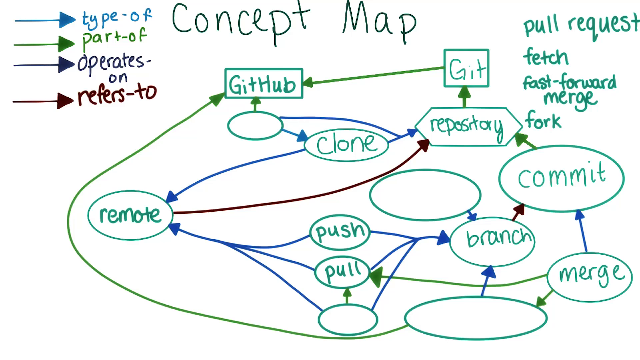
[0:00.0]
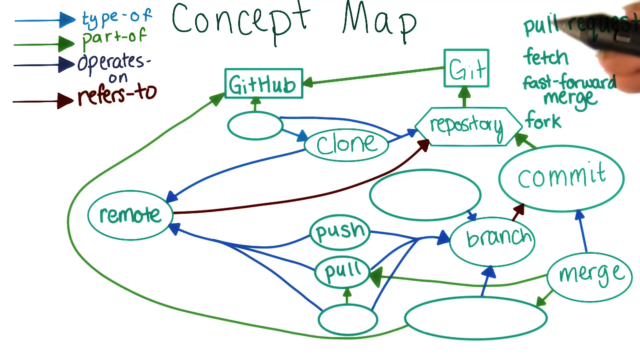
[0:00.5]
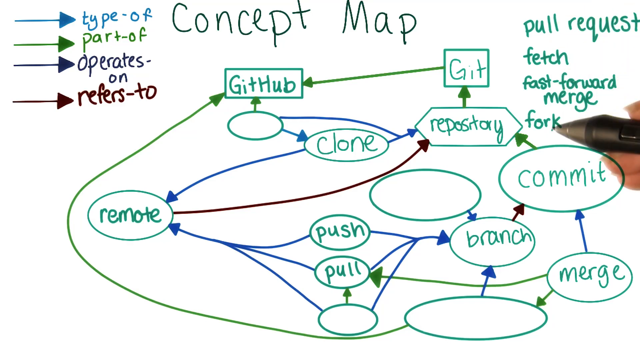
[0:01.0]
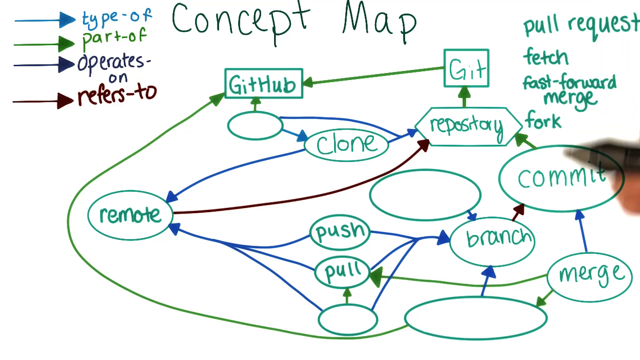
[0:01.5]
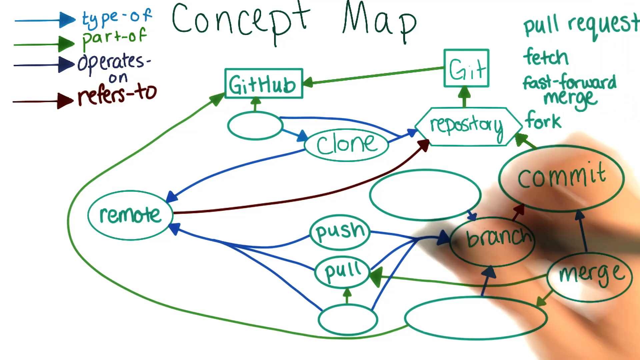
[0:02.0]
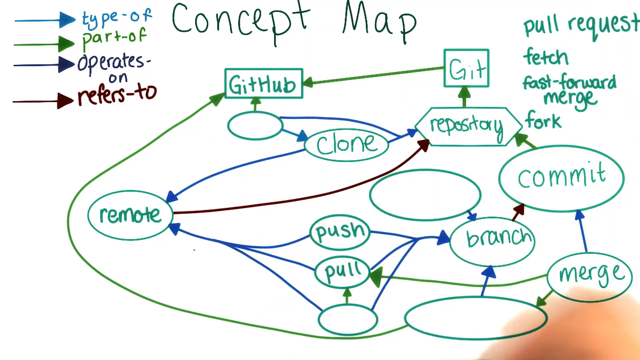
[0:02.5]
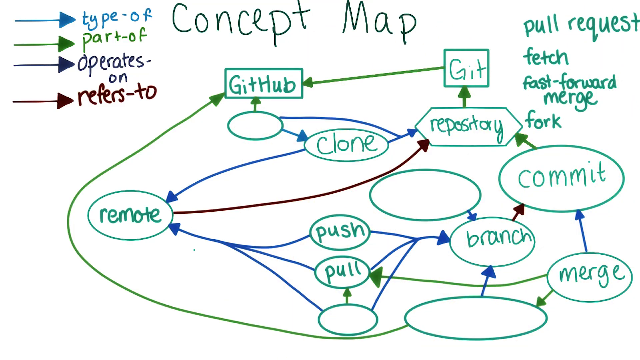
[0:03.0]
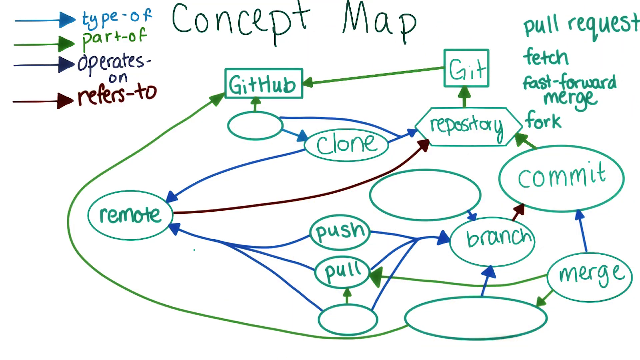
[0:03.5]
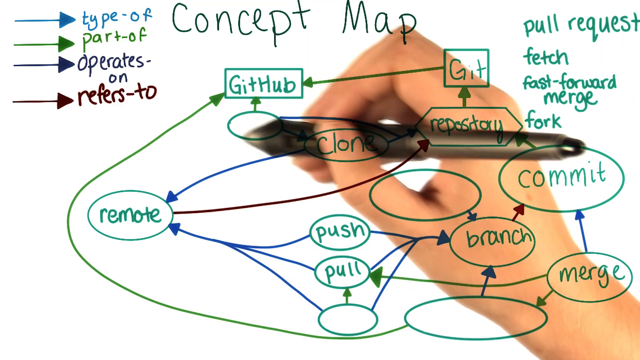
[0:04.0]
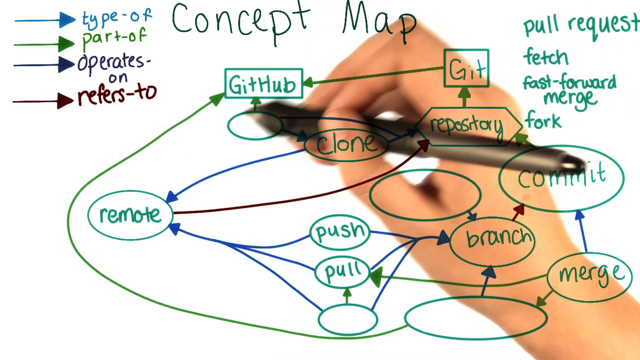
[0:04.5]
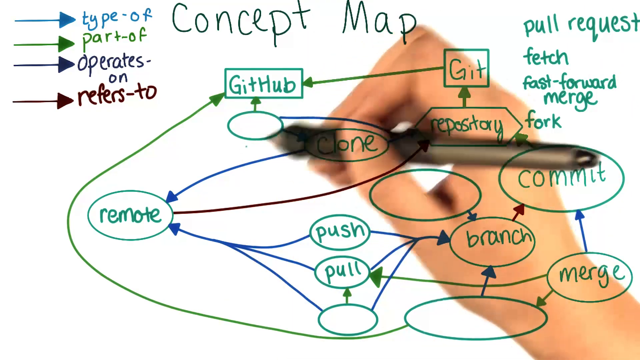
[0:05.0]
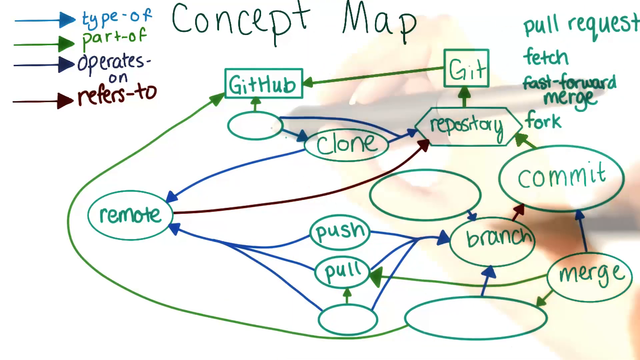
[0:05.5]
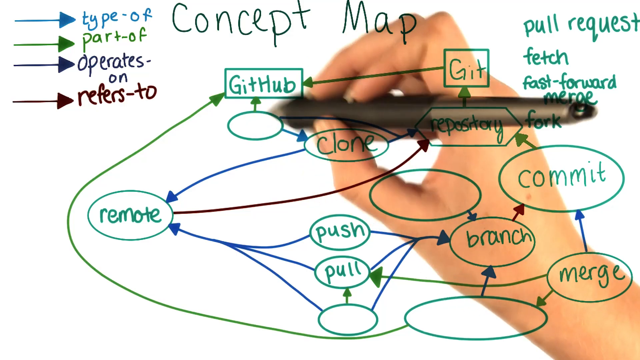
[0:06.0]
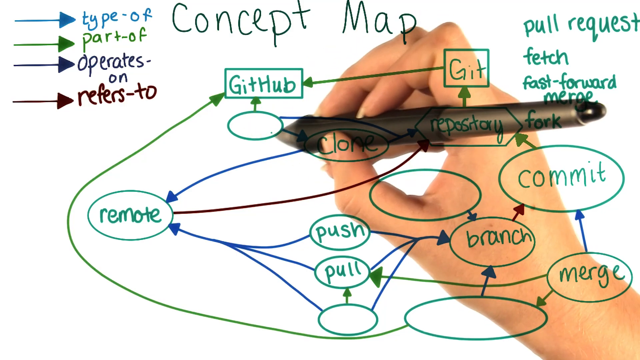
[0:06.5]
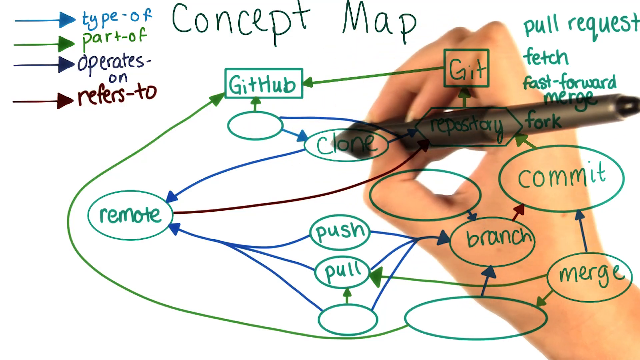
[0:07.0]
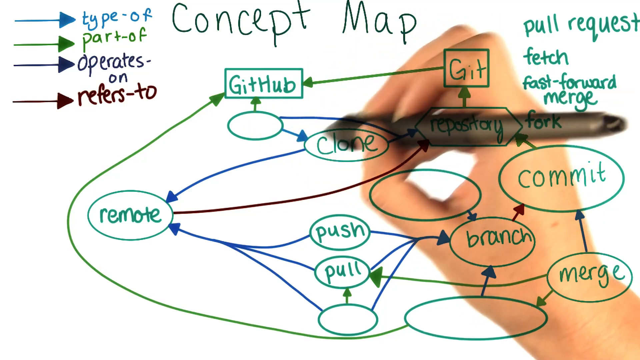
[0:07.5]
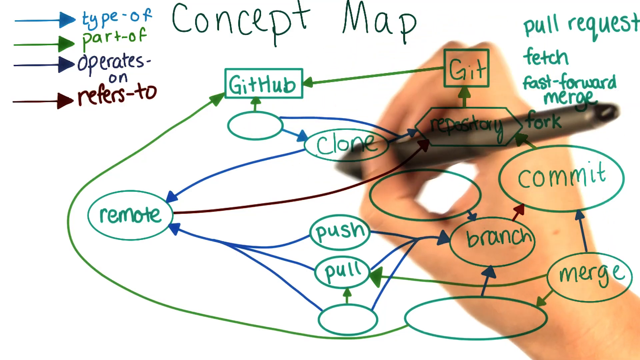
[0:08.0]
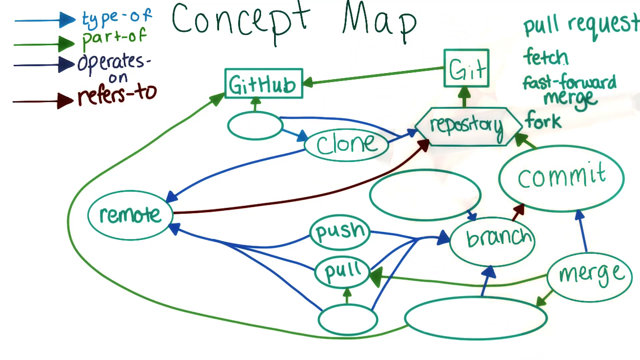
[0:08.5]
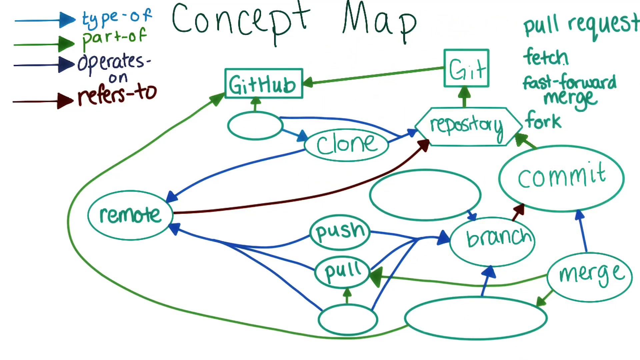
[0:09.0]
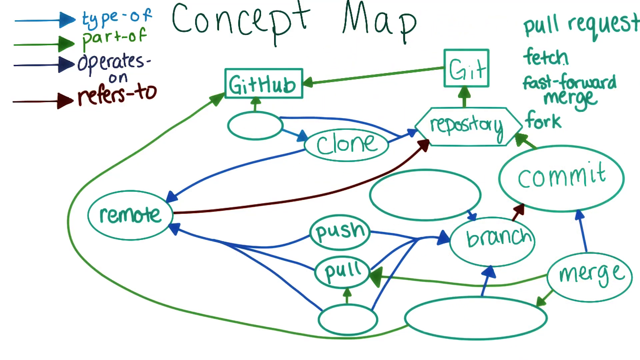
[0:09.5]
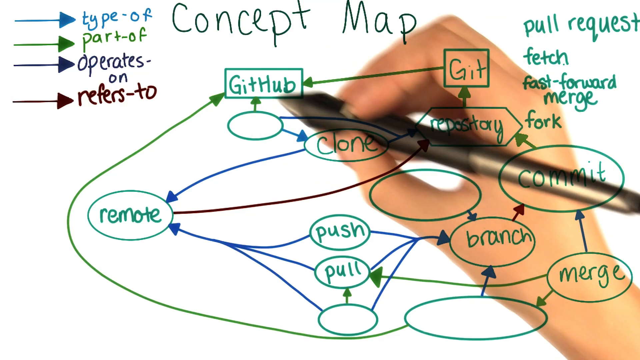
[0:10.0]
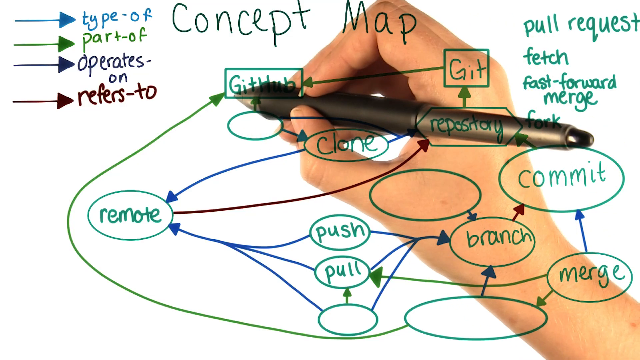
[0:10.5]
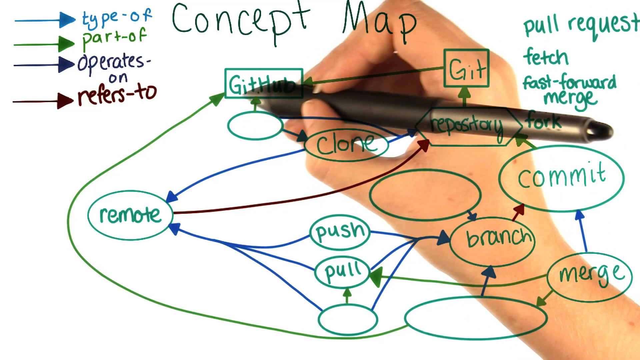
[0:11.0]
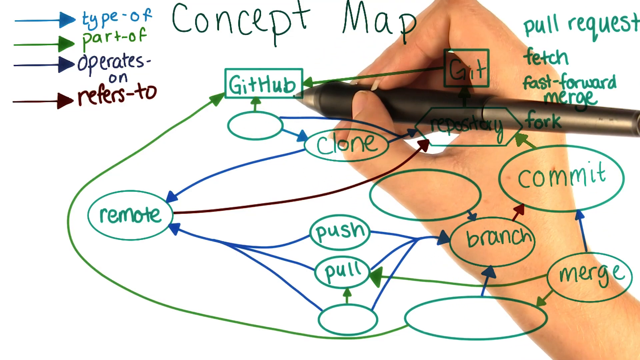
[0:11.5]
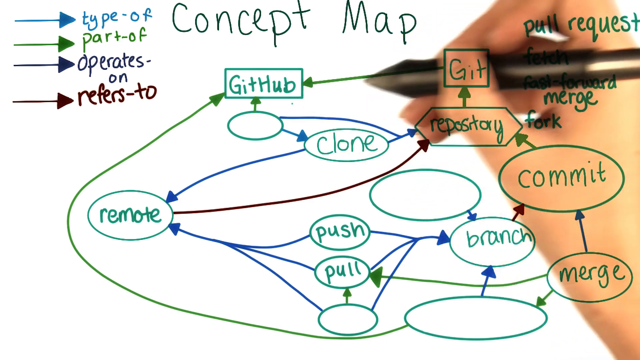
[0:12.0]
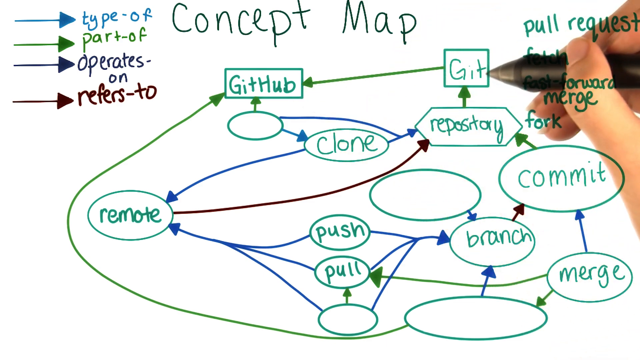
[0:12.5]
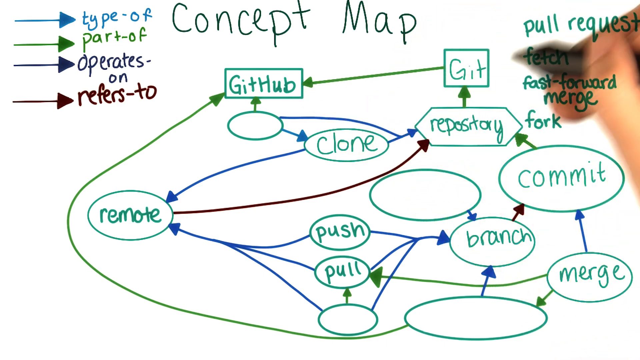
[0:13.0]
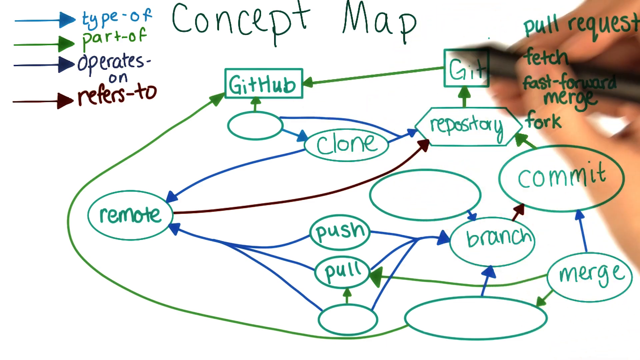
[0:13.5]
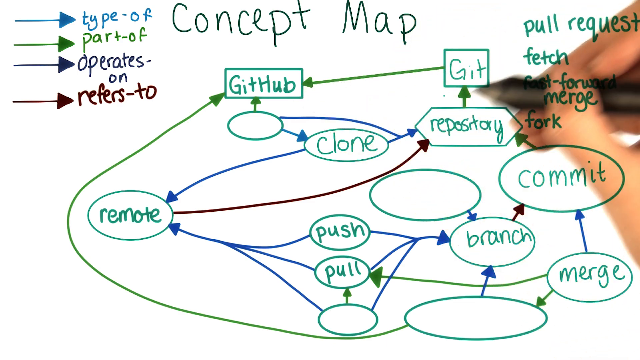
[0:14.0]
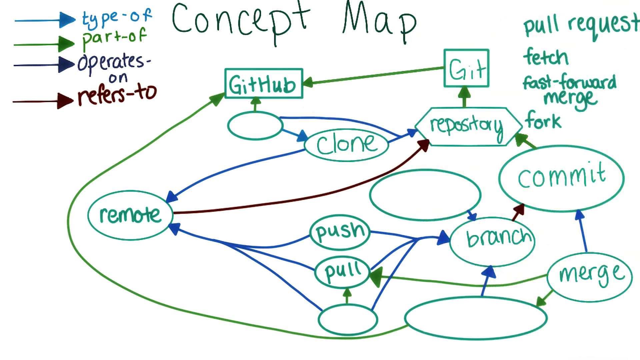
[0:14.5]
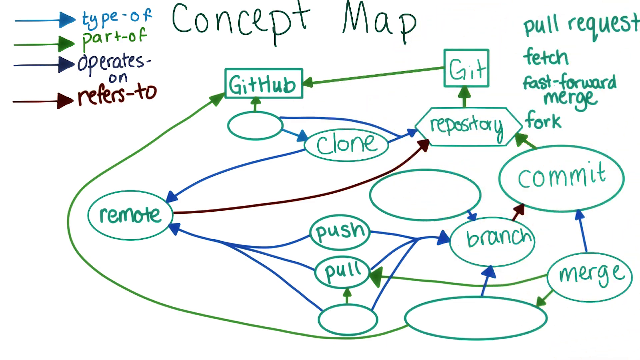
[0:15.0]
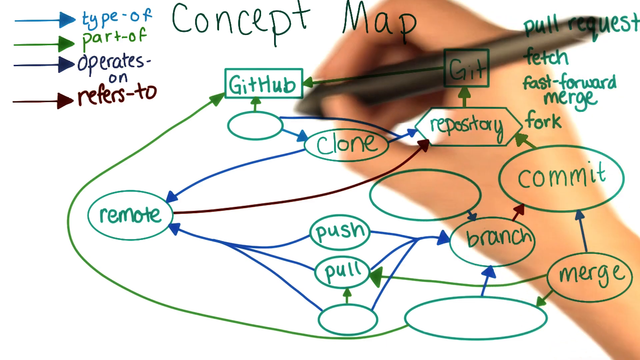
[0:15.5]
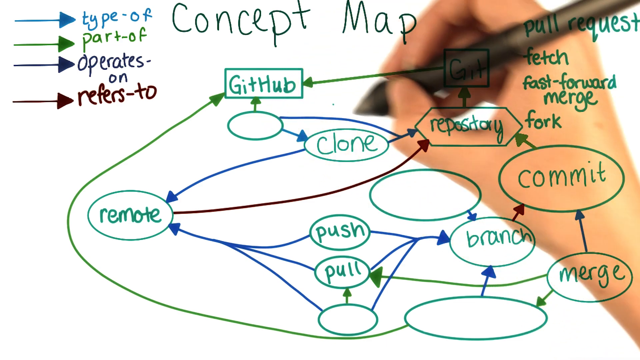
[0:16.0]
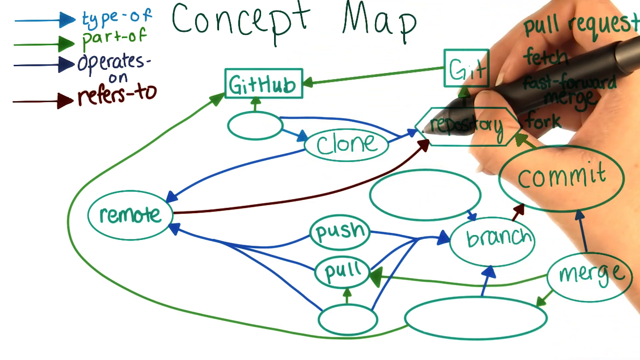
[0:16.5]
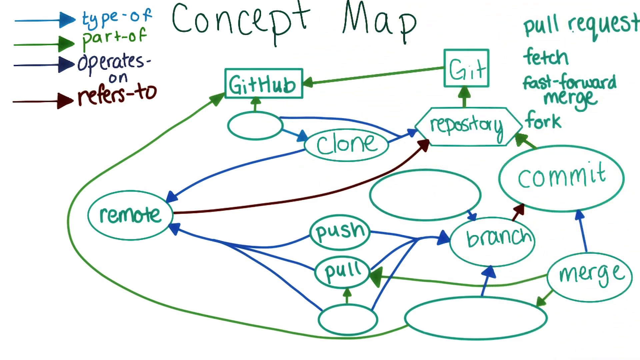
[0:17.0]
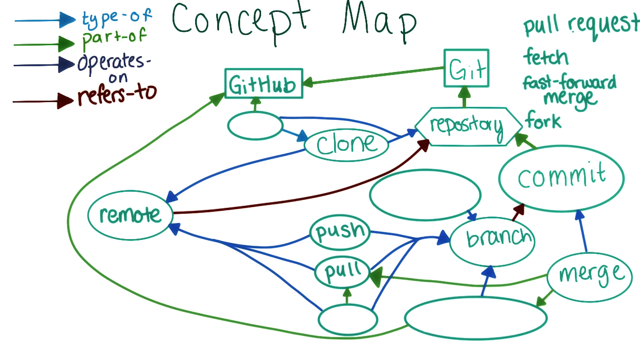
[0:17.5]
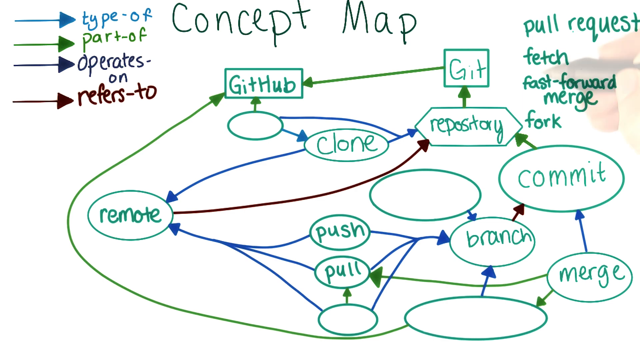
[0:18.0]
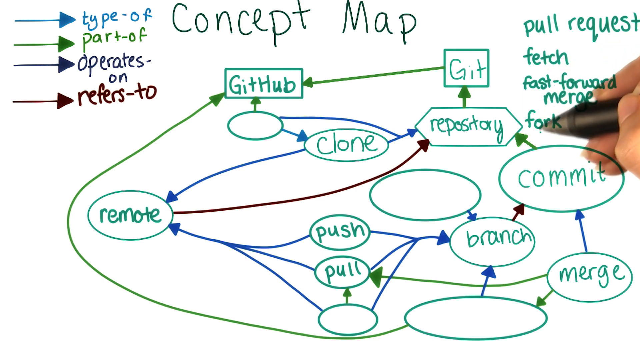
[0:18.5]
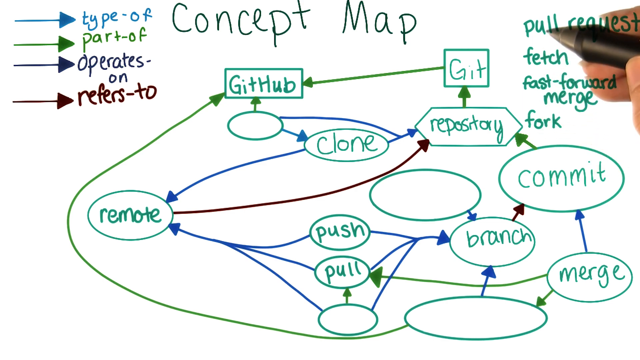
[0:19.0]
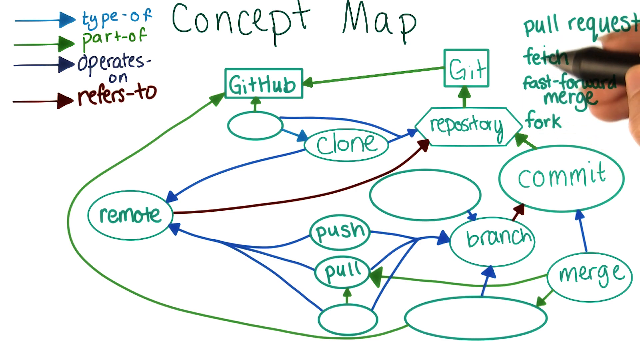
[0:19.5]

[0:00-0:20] The words "concept map" appear at the top. A legend shows a blue arrow labeled "type of," a green arrow labeled "part of," a purplish arrow labeled "operate on," and a brown arrow labeled "refers to." To the right are the words "pull request, fetch, fast forward, merge," and the page has a number of different squares and bubbles. A person holds a pen in her hand. She goes to "github" and circles it, goes to "clone" and circles it, underlines "github," and then goes to "git," the square to the right of it. The movement goes from the blank one to "repository," and then "pull request, fetch" is shown again. She circles and underlines different items on the page with the pen, not actually drawing but pointing as she makes the motions. She then goes to "pull request, fetch, fast forward, merge," and "fork." The diagram has different arrows going to different spots for the different types of parts of the concept map.